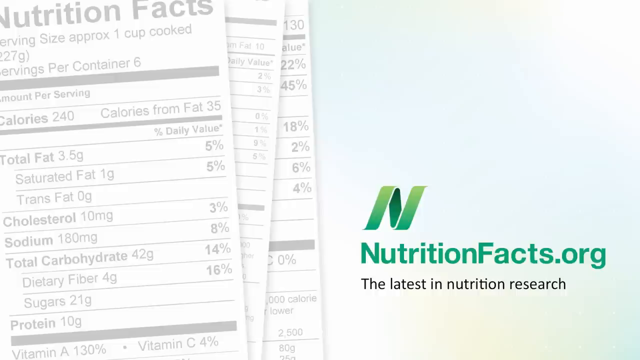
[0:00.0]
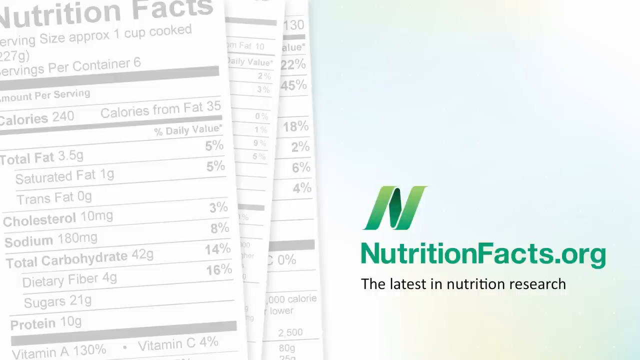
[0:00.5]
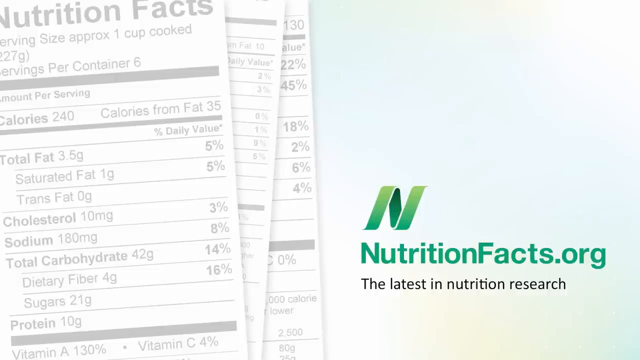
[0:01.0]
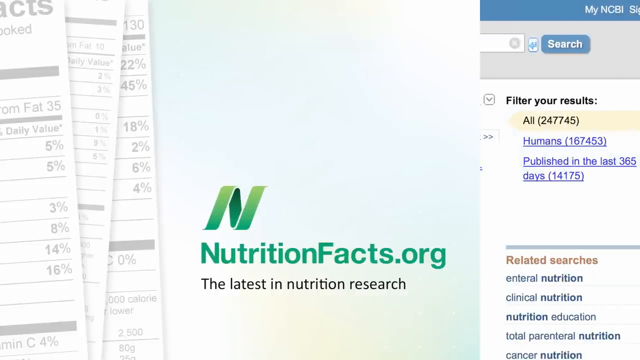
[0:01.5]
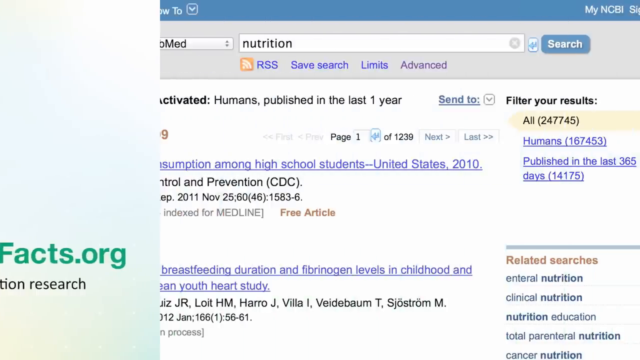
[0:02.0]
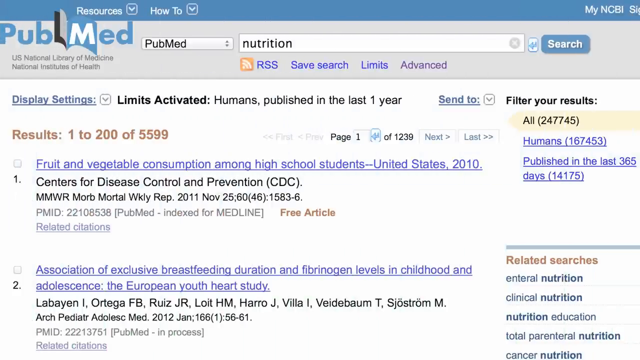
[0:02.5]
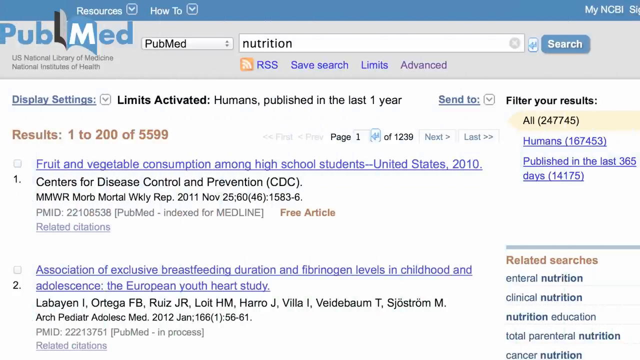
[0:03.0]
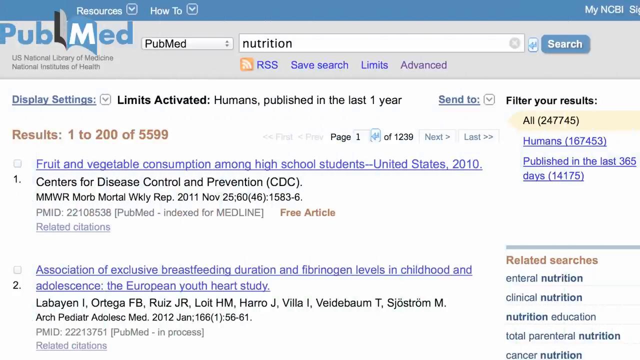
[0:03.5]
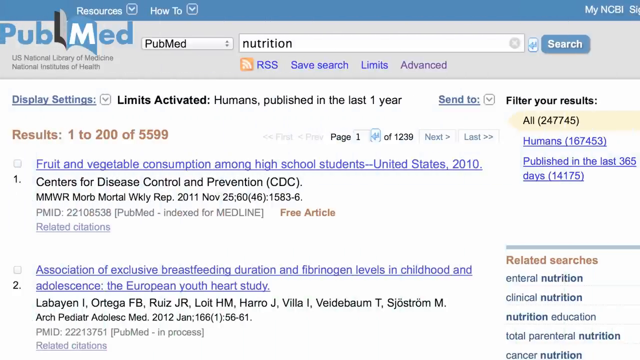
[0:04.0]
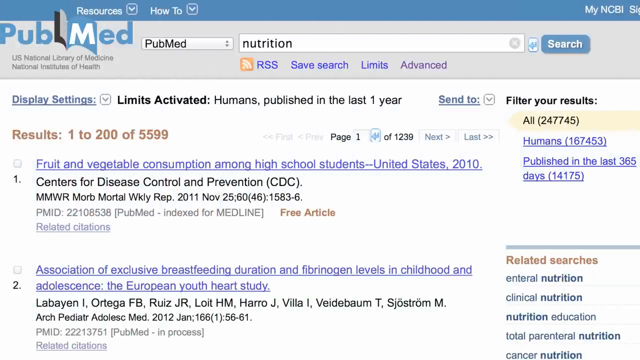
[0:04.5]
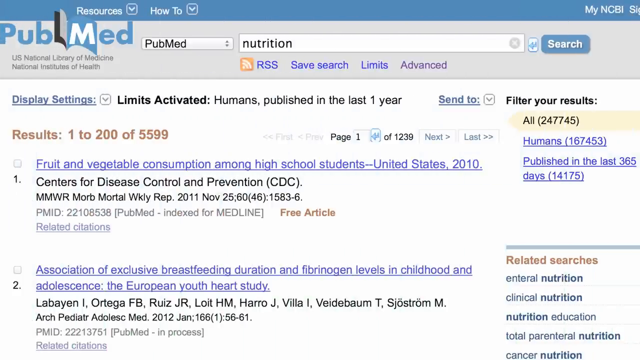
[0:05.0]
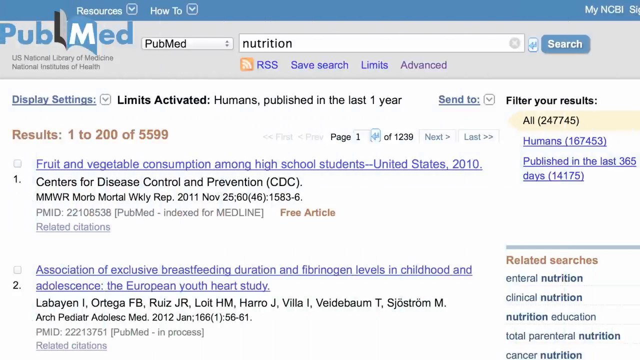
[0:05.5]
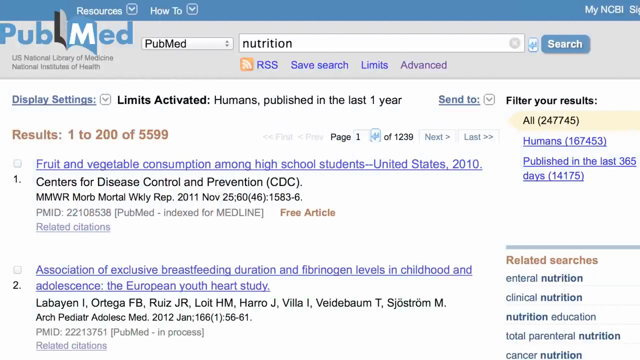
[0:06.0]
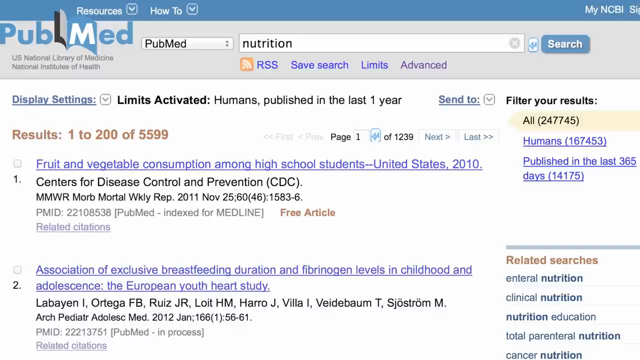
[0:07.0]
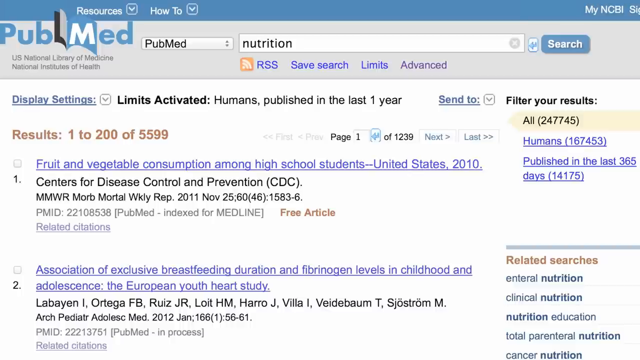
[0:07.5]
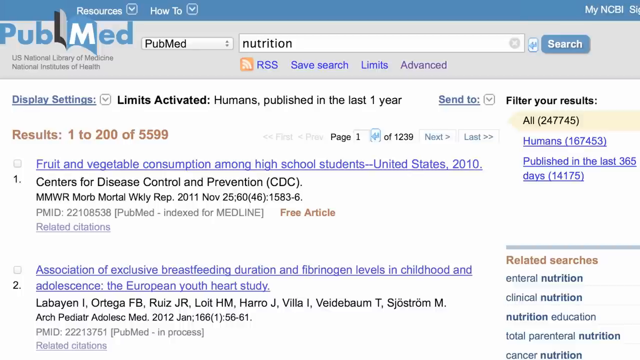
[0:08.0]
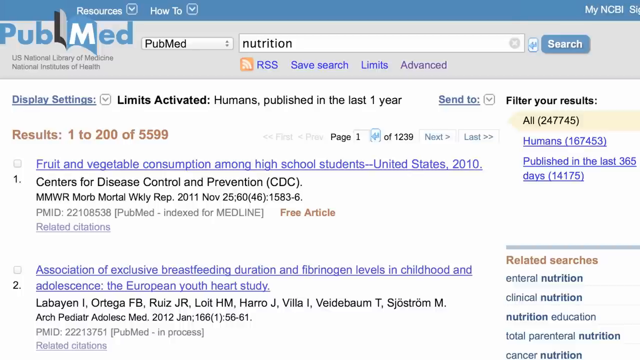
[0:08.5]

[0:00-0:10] The video looks somewhat like a slideshow. In the bottom right corner the text reads "nutritionfacts.org", with "the latest in nutrition research" below it, and on the left side there are clip images of nutrition facts like the ones normally seen on food. After two seconds, a PubMed search result appears, with "nutrition" typed in the search bar and results from different studies listed. The first result reads "fruit and vegetable consumption among high school students", and the bottom one reads "association of exclusive breastfeeding duration of fibrinogen levels in childhood and adolescence".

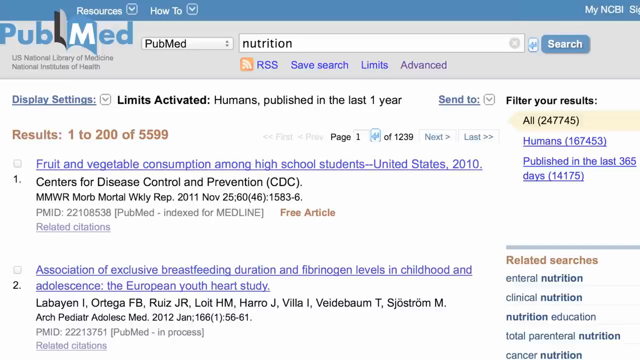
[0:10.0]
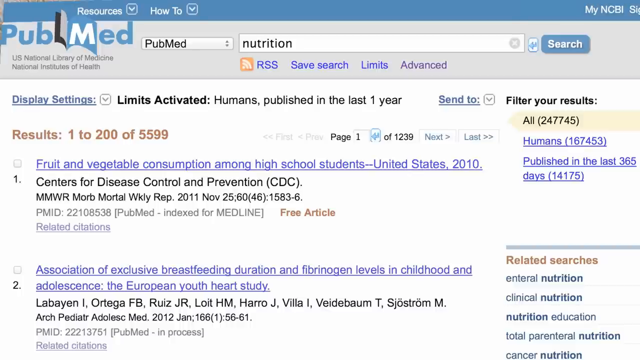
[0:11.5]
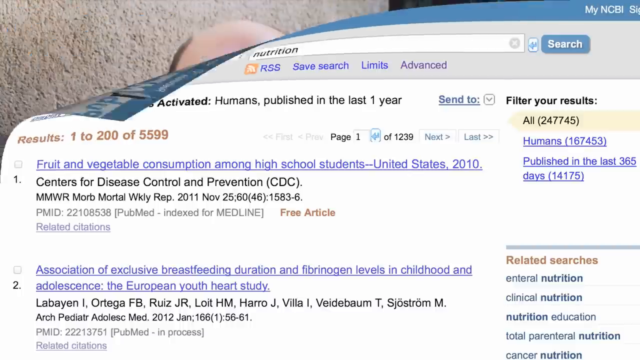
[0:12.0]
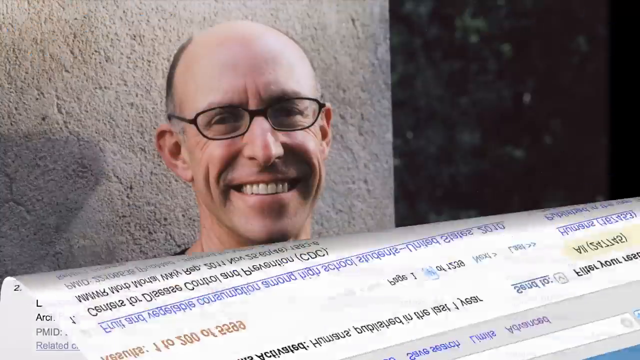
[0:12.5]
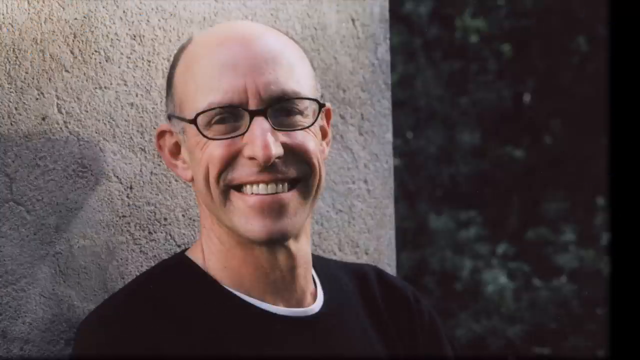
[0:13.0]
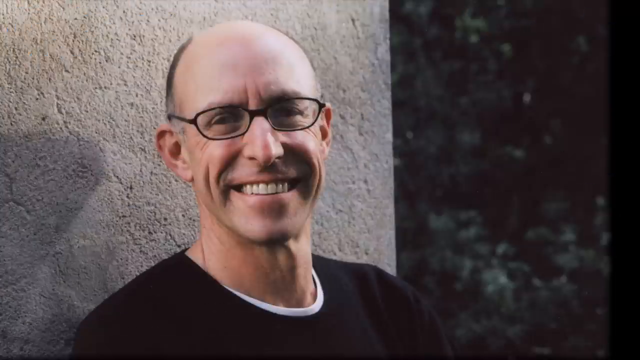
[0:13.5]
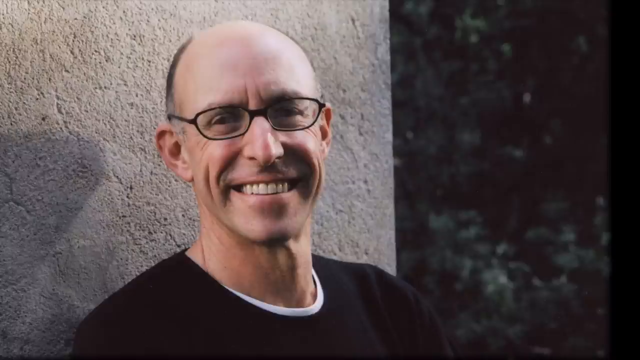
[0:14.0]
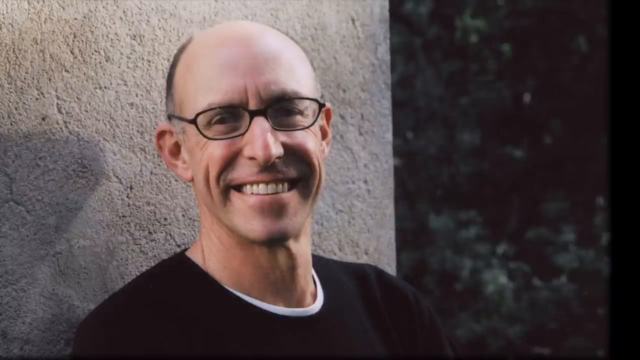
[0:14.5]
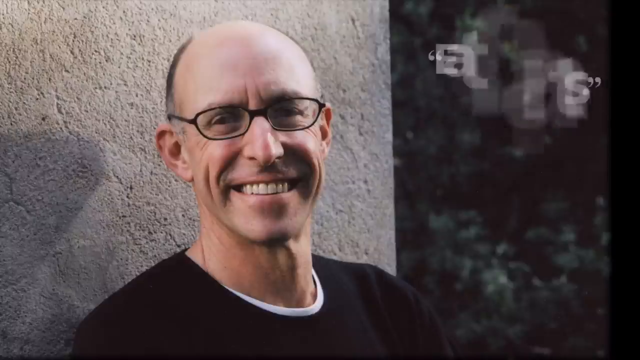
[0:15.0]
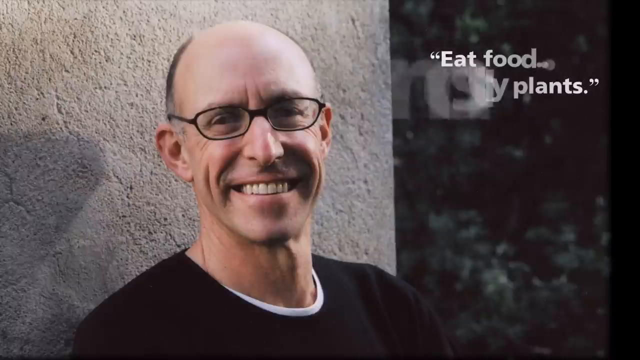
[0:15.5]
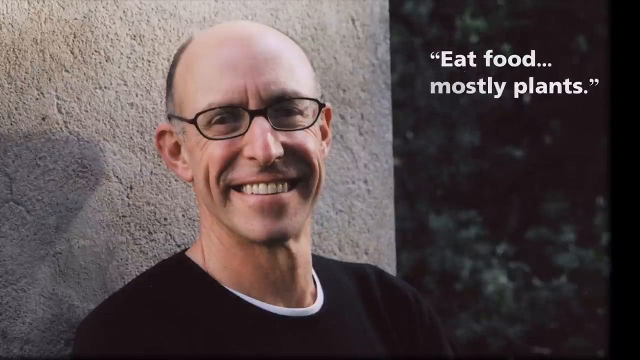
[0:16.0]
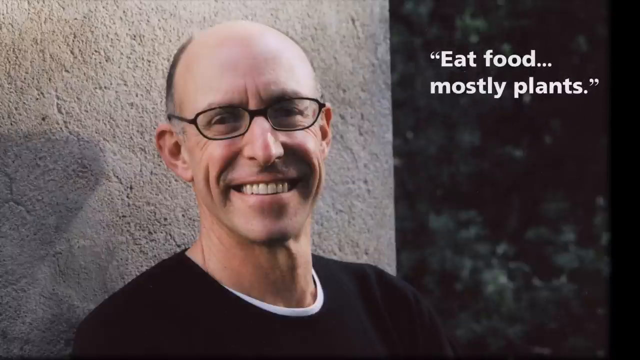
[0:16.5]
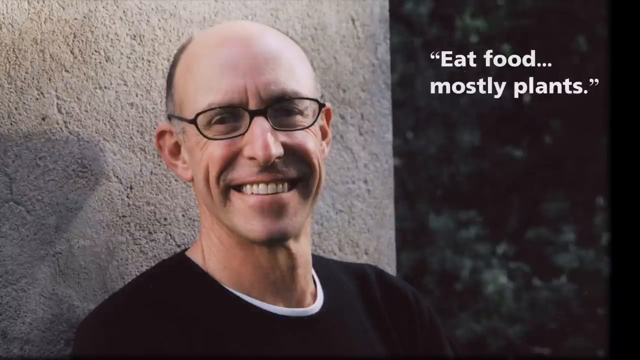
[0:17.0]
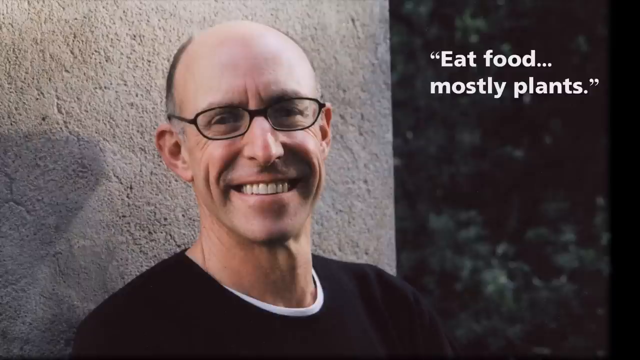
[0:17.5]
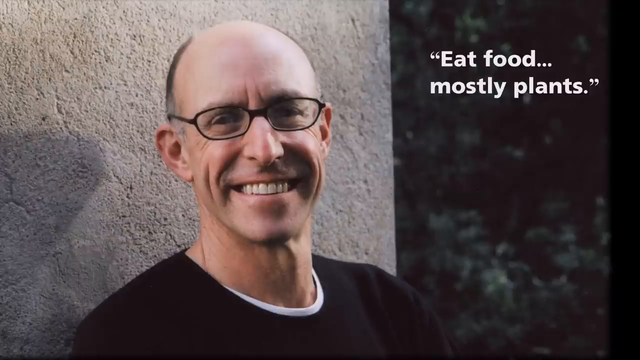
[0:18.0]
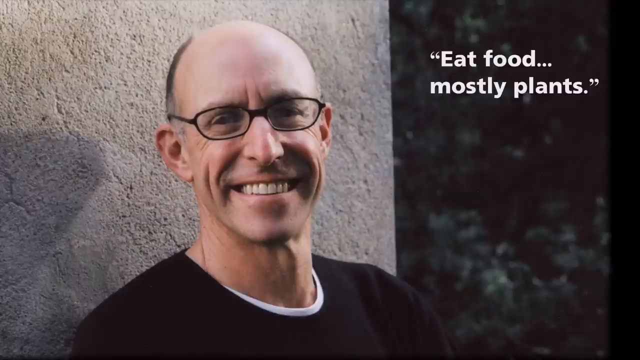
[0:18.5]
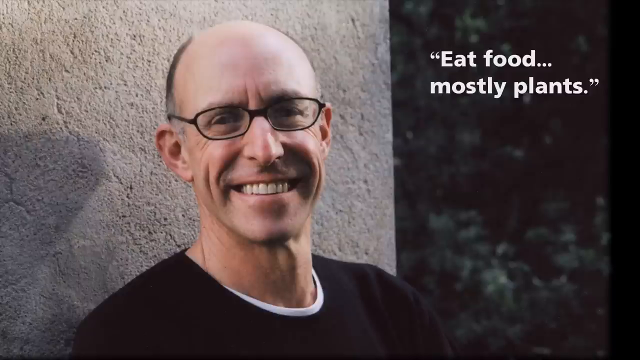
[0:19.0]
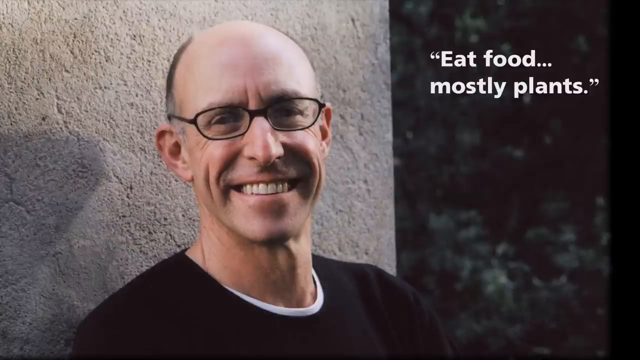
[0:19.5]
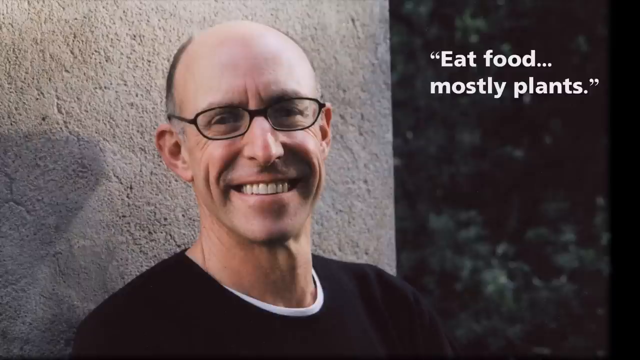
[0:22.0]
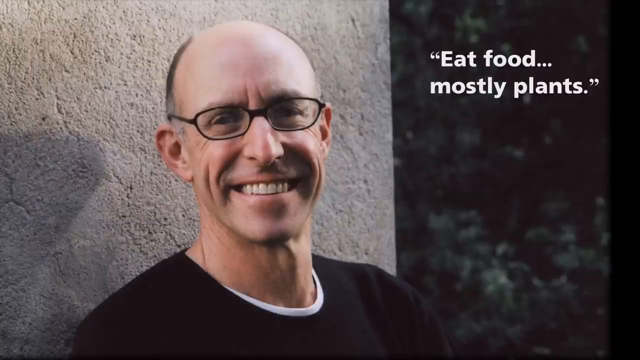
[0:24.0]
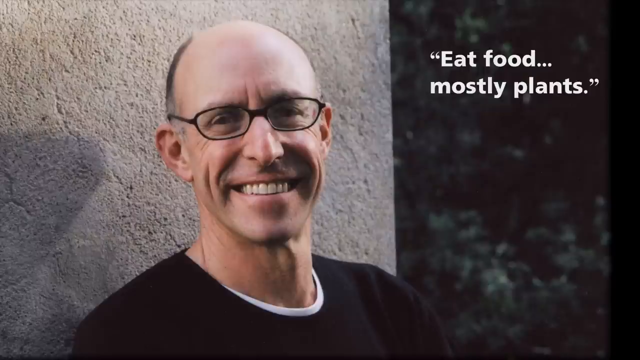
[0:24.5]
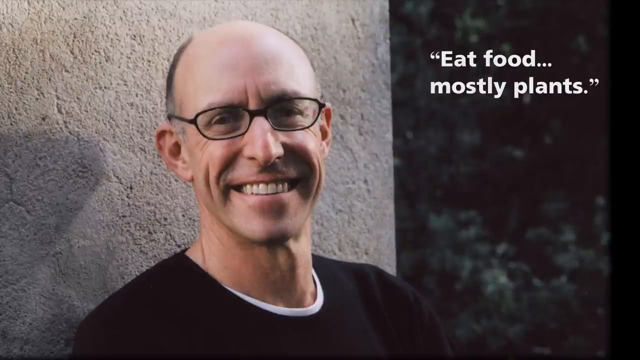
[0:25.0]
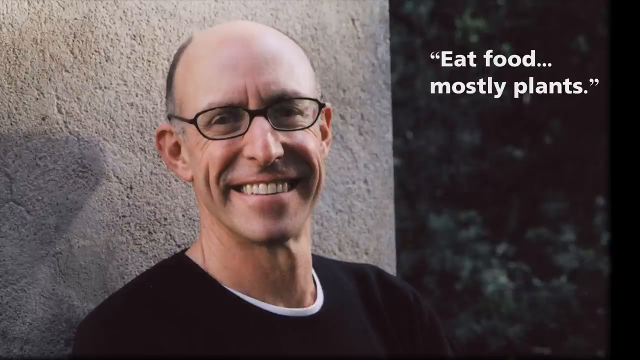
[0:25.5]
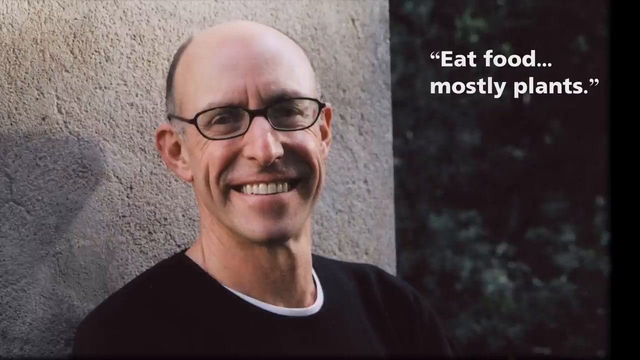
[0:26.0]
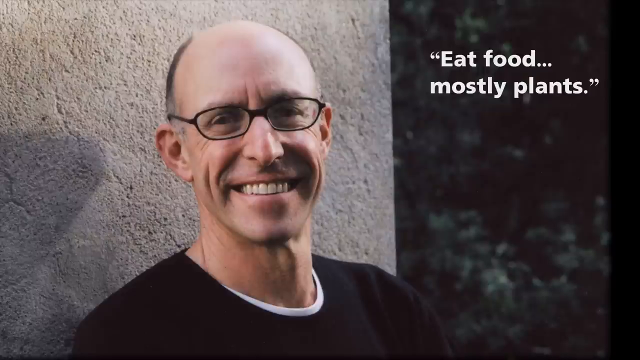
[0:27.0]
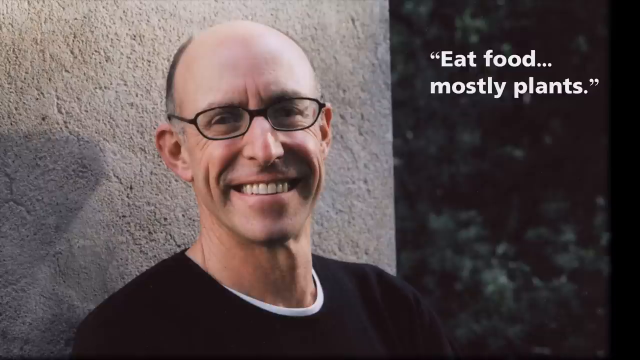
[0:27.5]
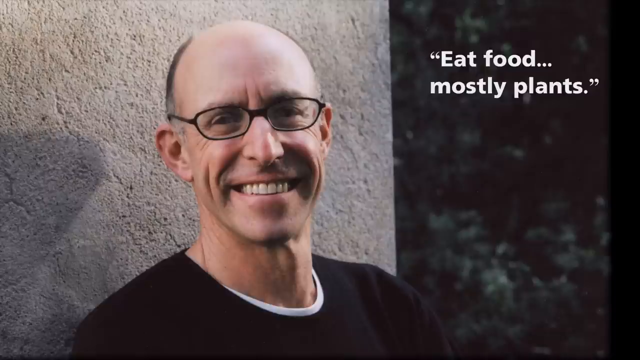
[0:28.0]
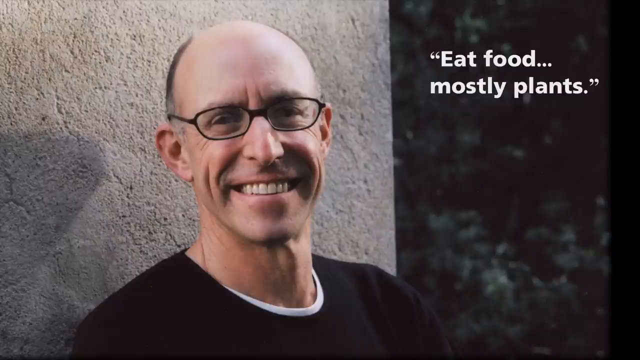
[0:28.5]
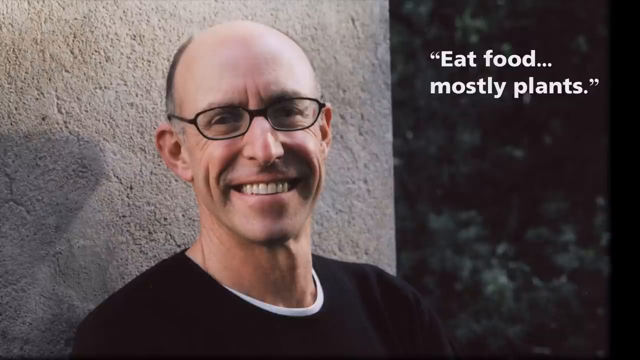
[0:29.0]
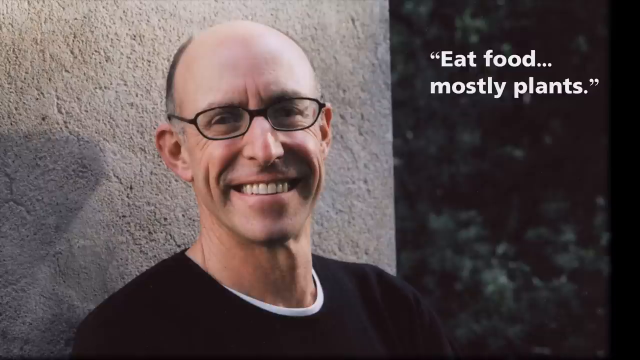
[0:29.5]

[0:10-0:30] A transition in which the page turns and flips over leads to another slide showing a smiling white man, apparently a clip image. He looks to be in his late 40s and wears glasses and a black sweater, with a white t-shirt visible underneath. He is bald with some hair on the sides by his ears, has a little bit of a mustache, and has something like dimples at the sides of his mouth. A quote next to him reads "eat food... mostly plants". He is behind something like a grey concrete wall, and on his left side trees can somewhat be seen in the background, so he is outdoors in nature.